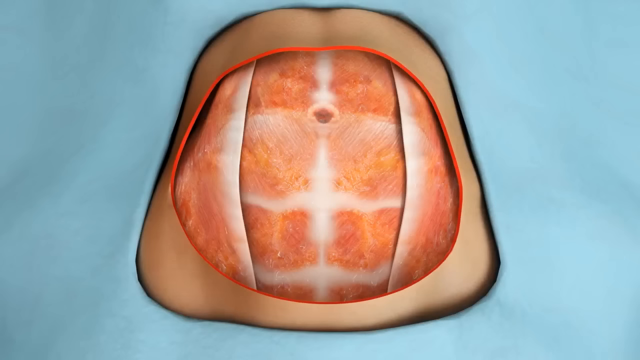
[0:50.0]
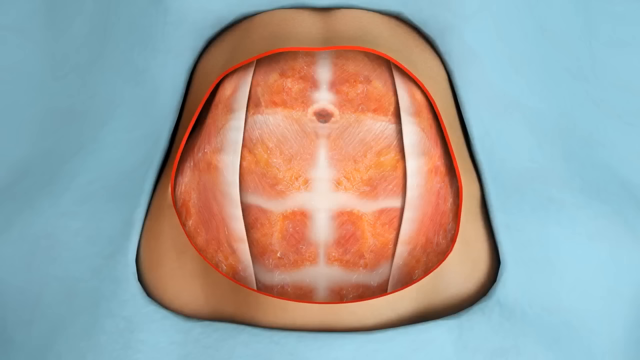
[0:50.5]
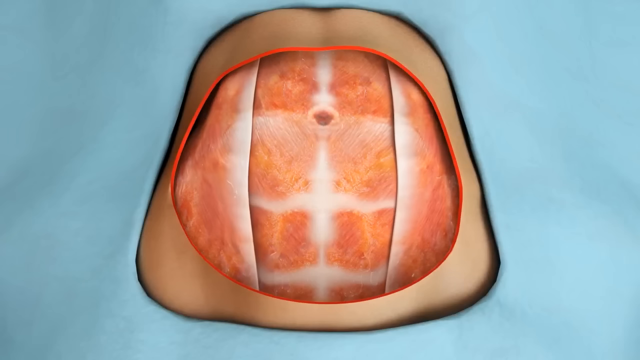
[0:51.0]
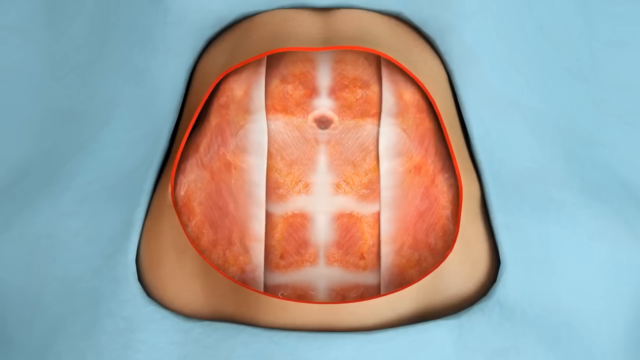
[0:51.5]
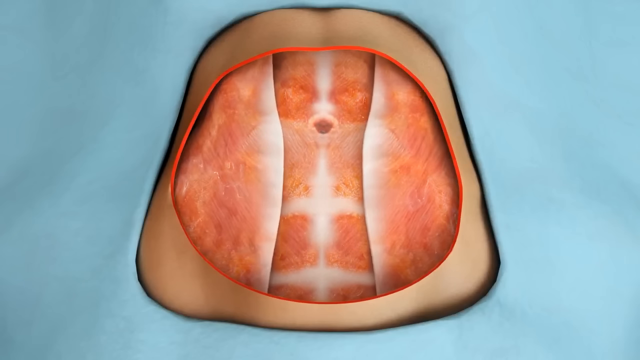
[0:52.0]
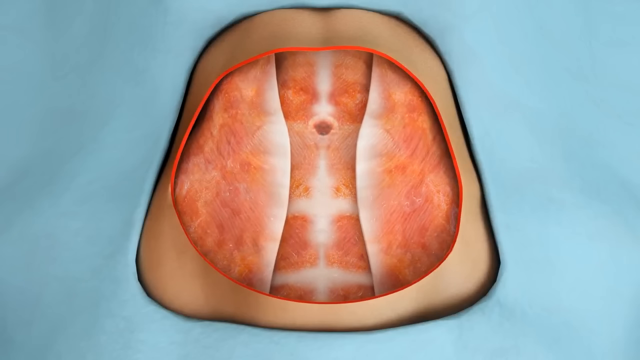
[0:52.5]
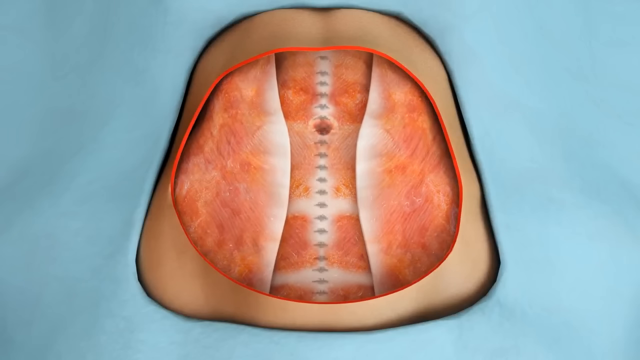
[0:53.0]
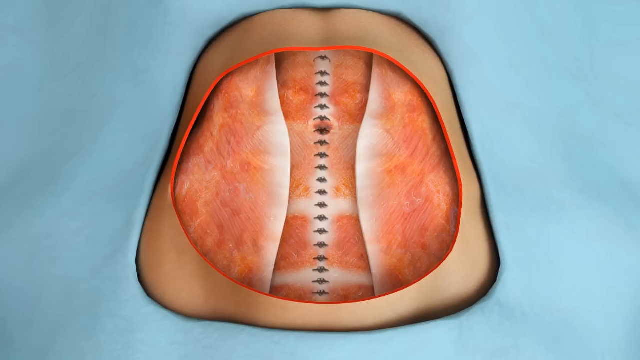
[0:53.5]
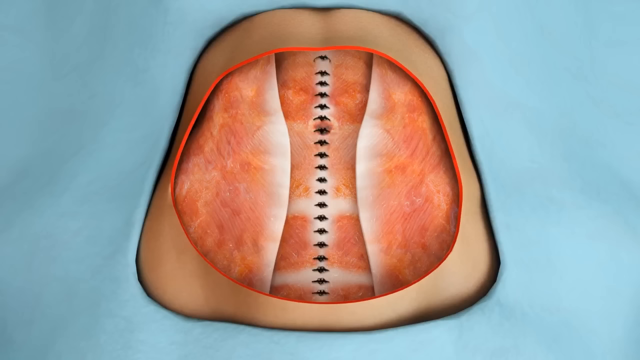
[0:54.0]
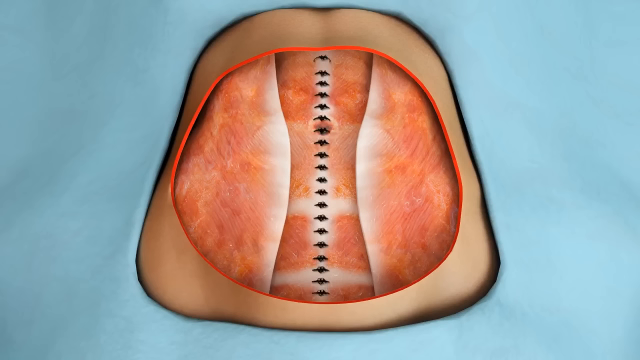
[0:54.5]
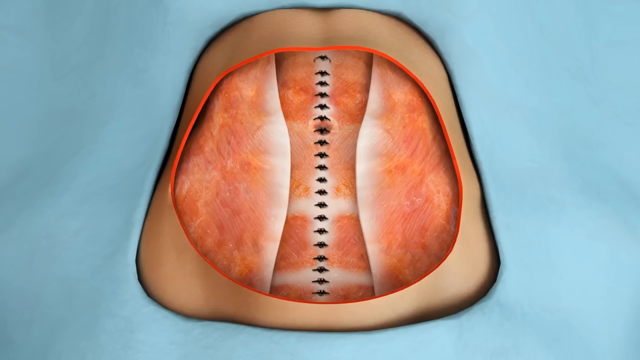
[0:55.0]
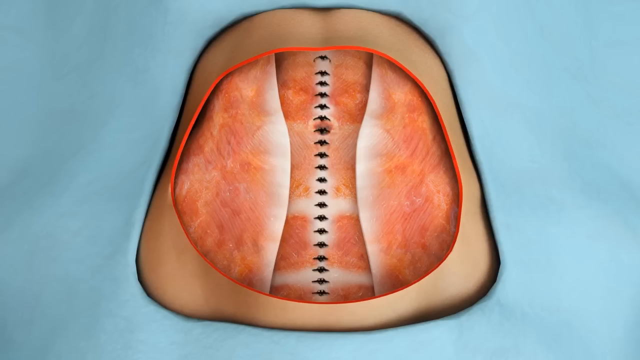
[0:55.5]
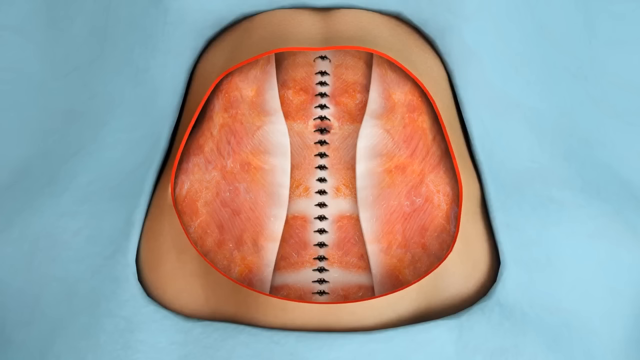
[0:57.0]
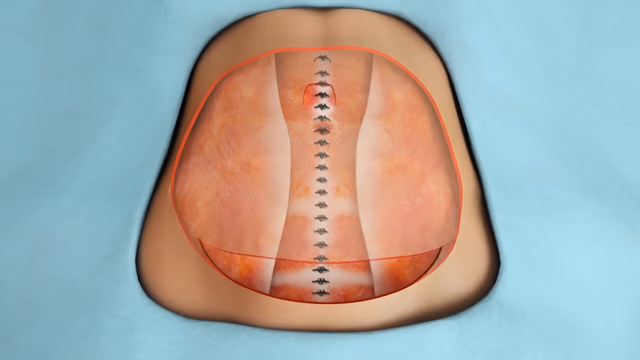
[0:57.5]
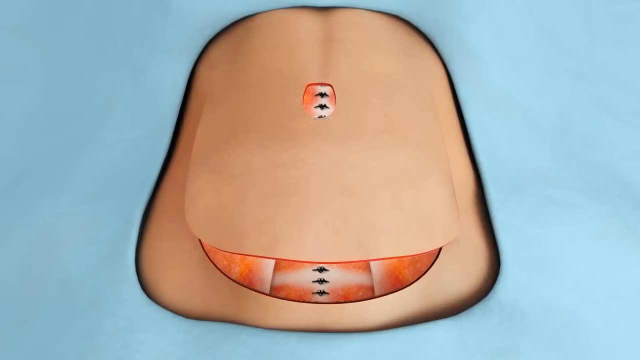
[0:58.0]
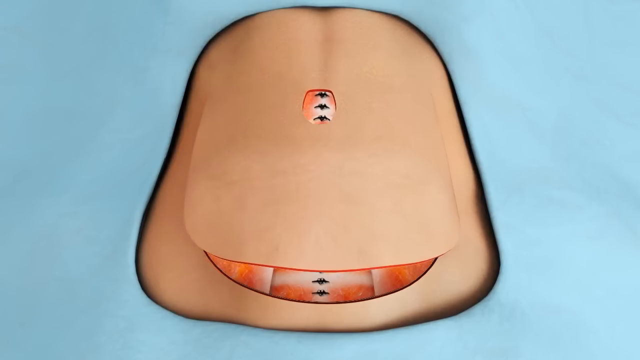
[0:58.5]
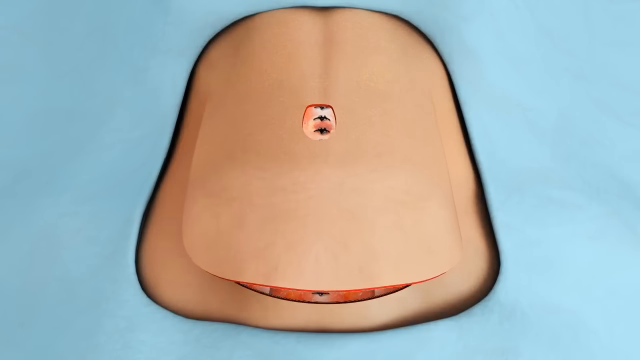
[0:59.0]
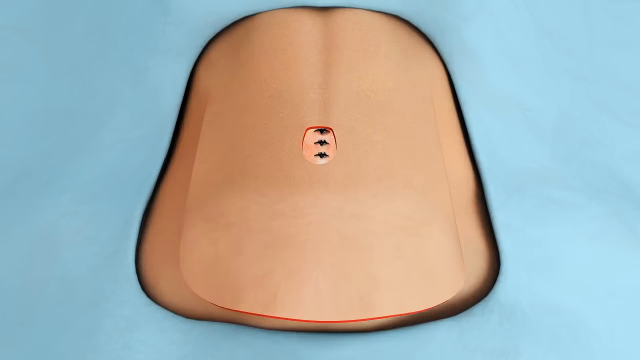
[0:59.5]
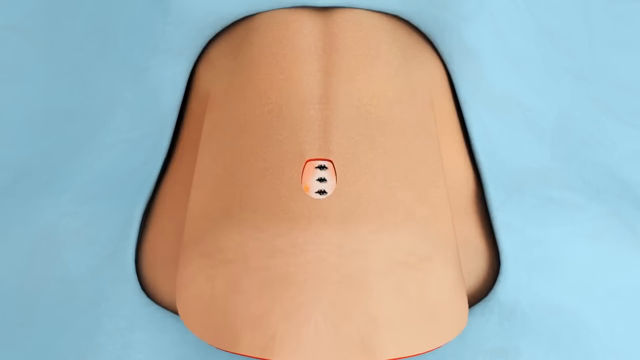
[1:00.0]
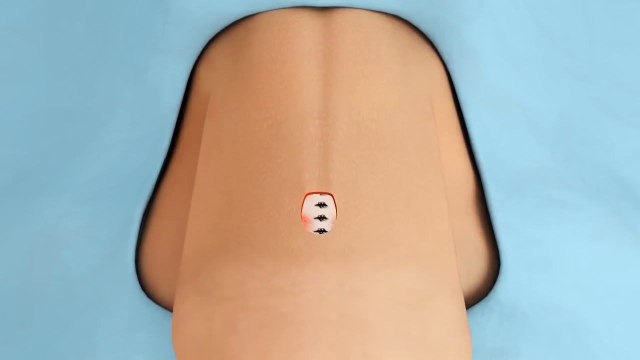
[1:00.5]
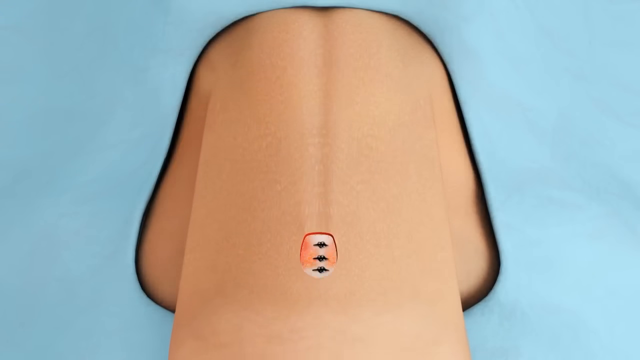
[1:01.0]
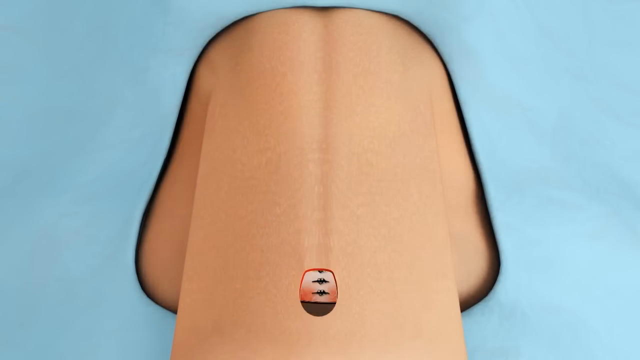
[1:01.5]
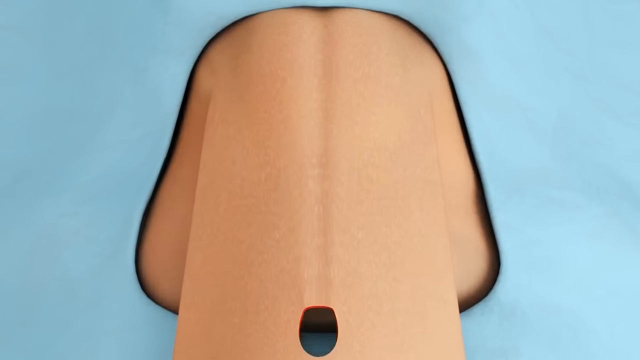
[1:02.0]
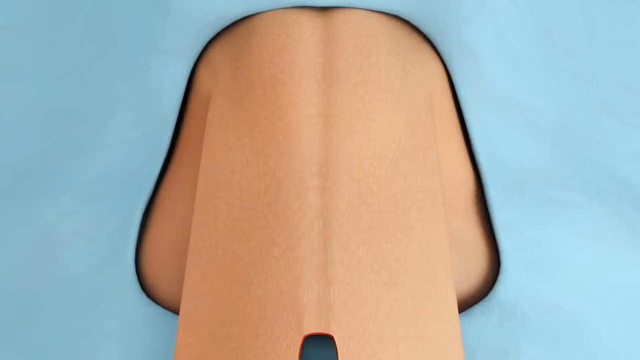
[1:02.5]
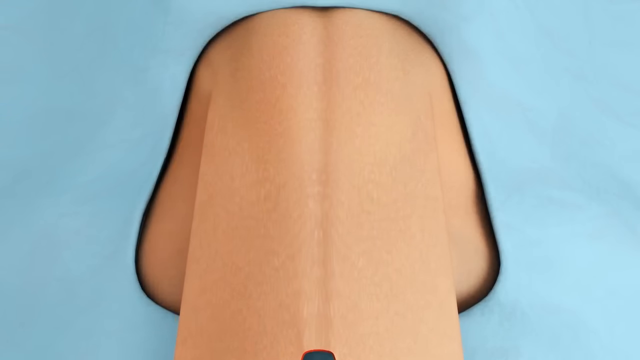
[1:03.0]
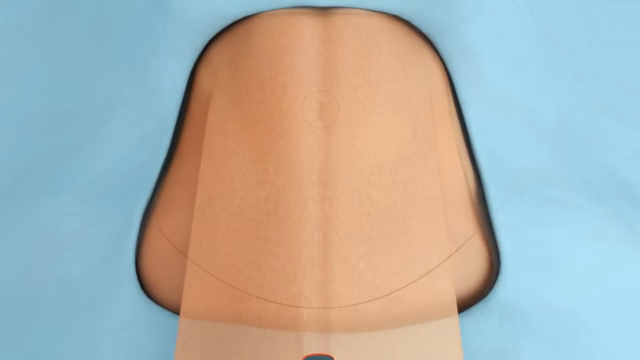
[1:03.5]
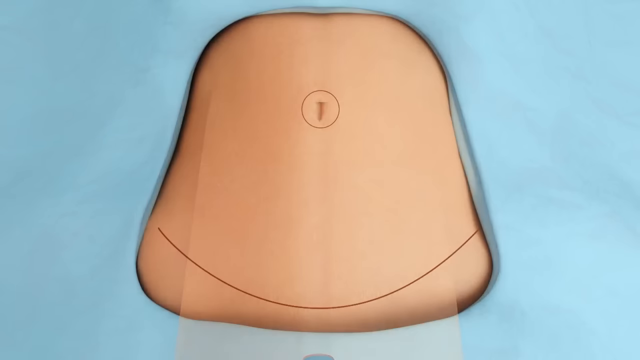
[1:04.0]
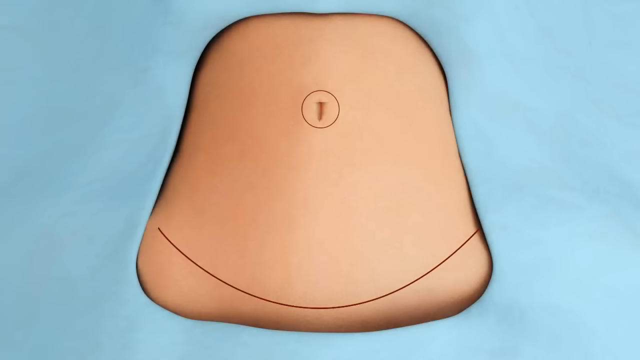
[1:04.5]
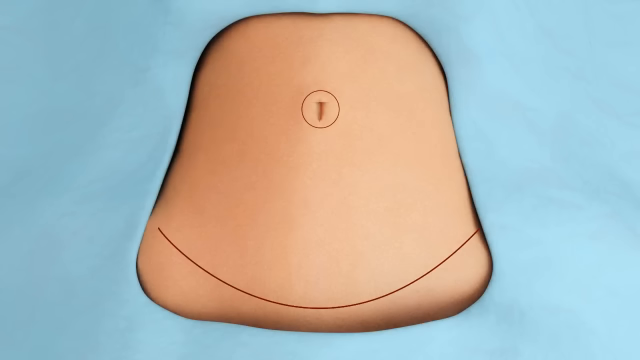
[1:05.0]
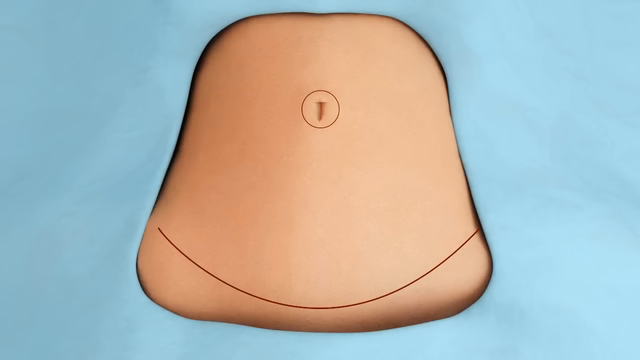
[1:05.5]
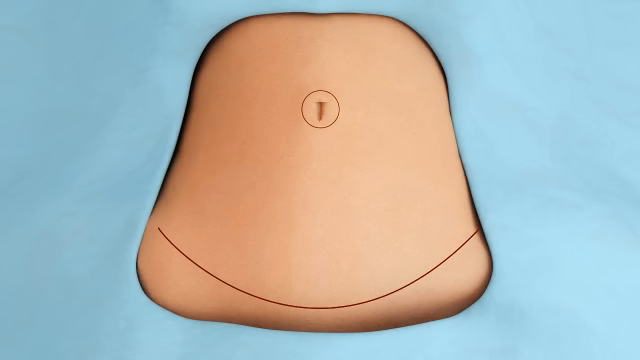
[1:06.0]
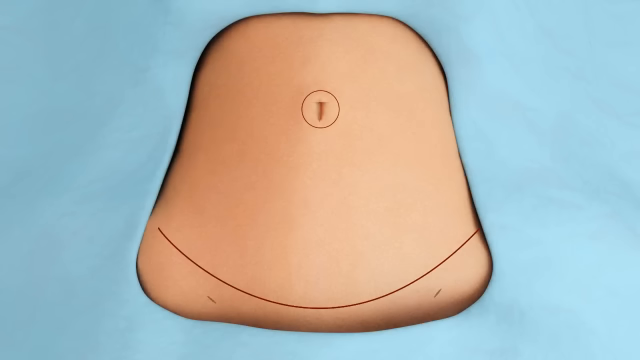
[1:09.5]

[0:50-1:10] The skin remains open within the red line, an irregular circle covering the whole stomach, showing the muscular tissue underneath. The muscular tissue on the sides moves closer together towards the middle of the body. Black dots then form from the bottom of the abdomen over the muscular tissue, looking like little lines, apparently staples or sutures, running up over the belly button to the top of the hole in the skin. The image changes to a flap of skin over the stomach again, and the skin is drawn down, as if pulled and stretched down. There is one single line inside, and then the previously drawn black line on the tummy and the circle around the belly button are shown. The stomach is back in place but flatter.